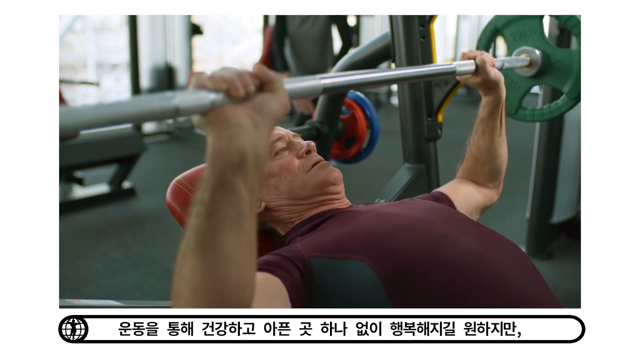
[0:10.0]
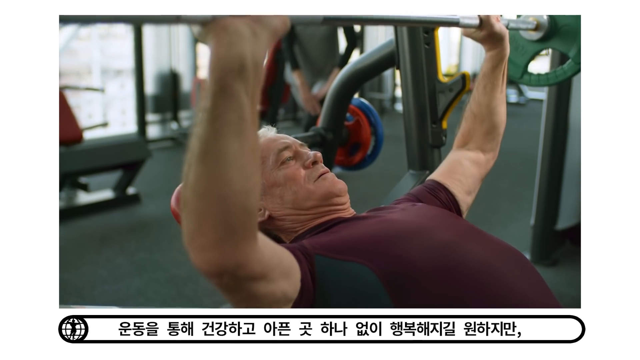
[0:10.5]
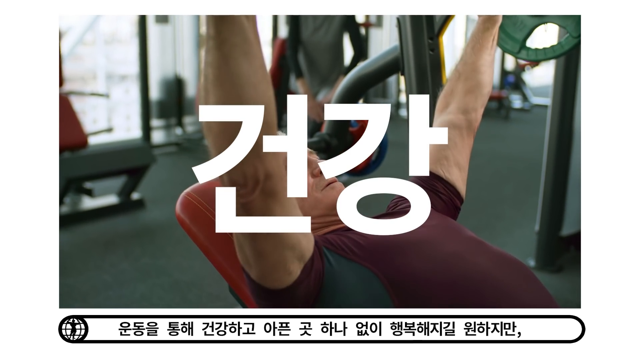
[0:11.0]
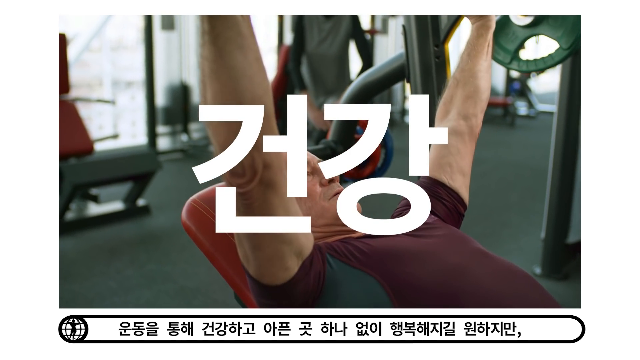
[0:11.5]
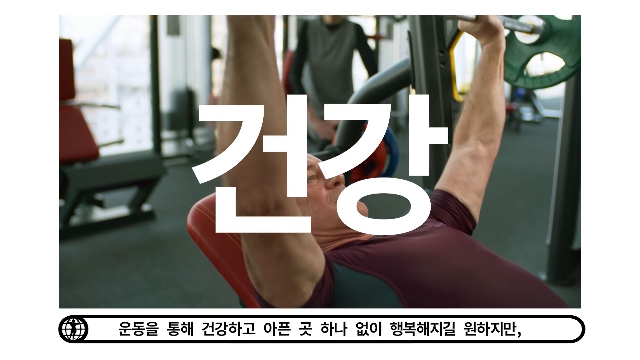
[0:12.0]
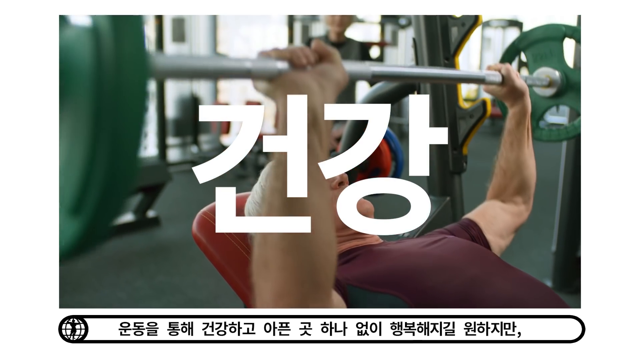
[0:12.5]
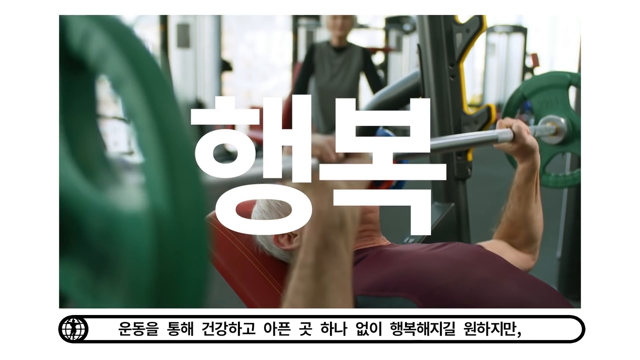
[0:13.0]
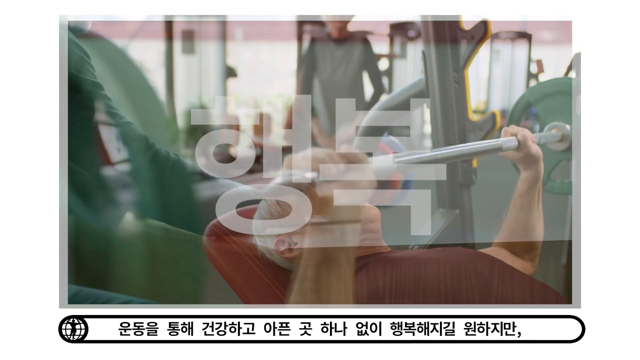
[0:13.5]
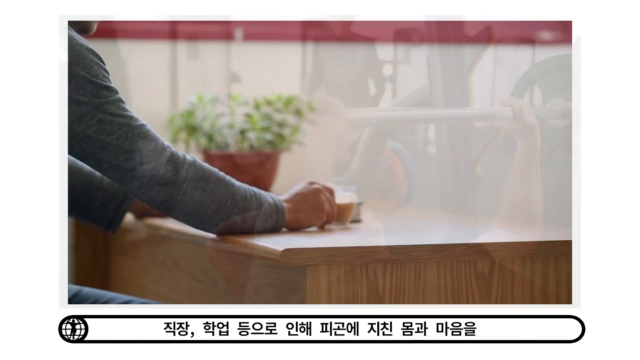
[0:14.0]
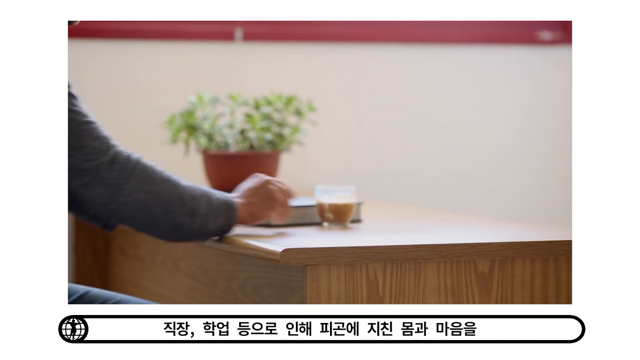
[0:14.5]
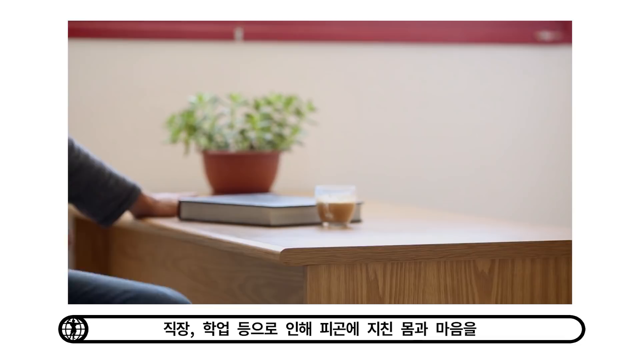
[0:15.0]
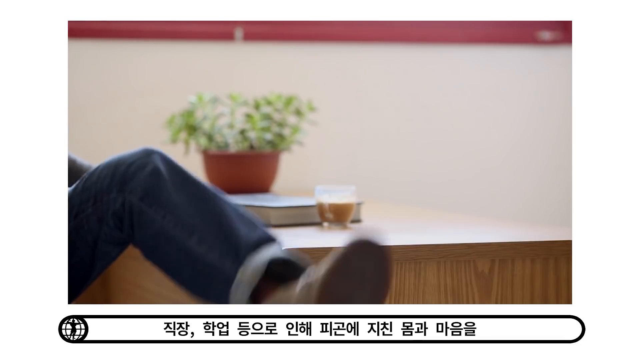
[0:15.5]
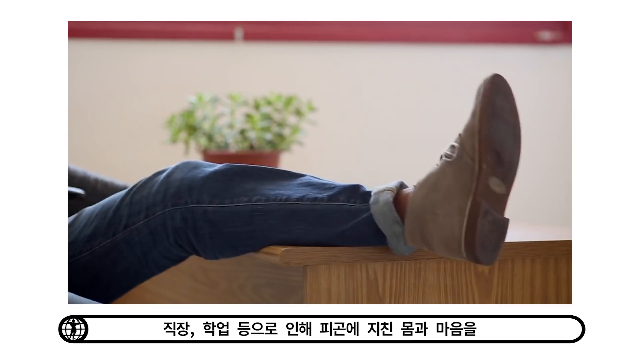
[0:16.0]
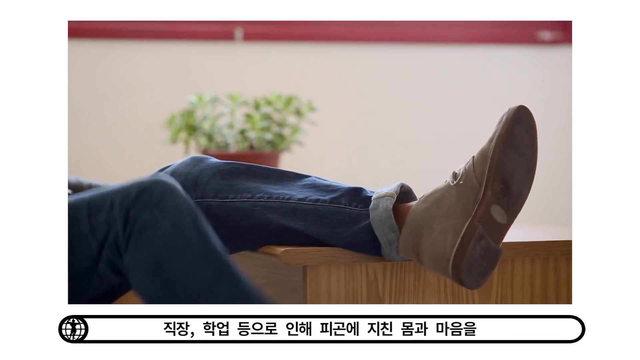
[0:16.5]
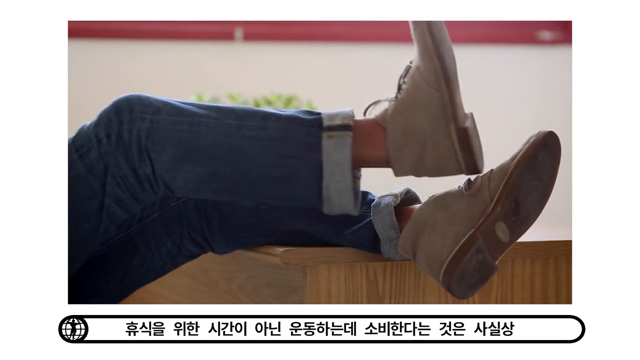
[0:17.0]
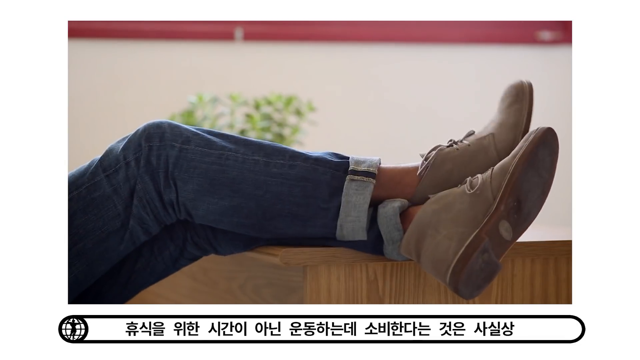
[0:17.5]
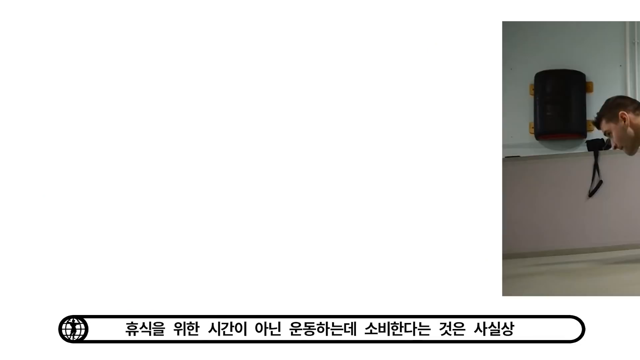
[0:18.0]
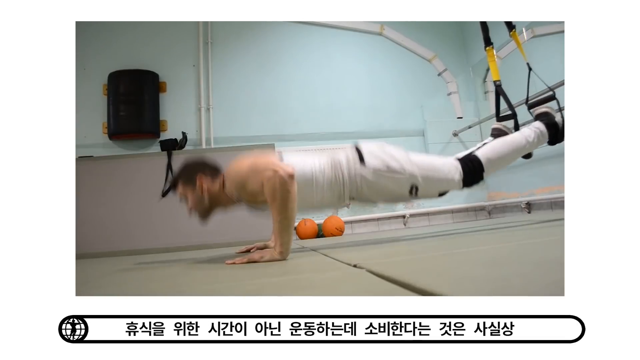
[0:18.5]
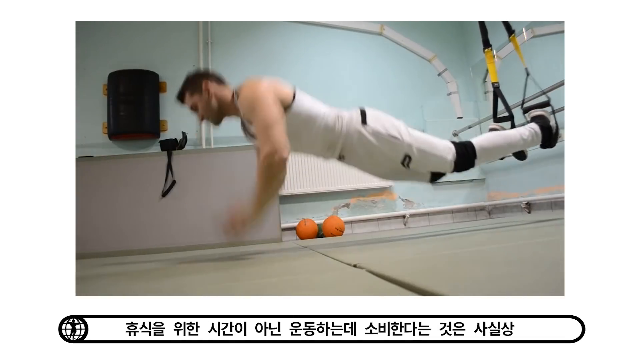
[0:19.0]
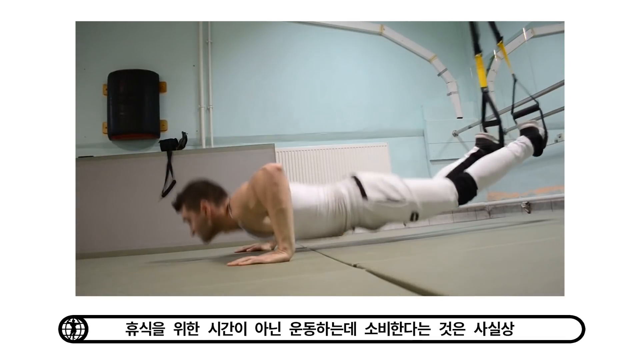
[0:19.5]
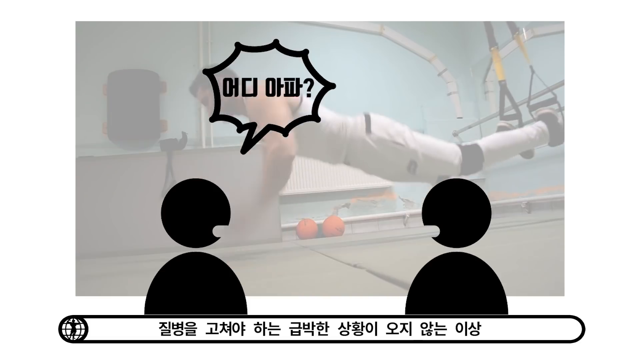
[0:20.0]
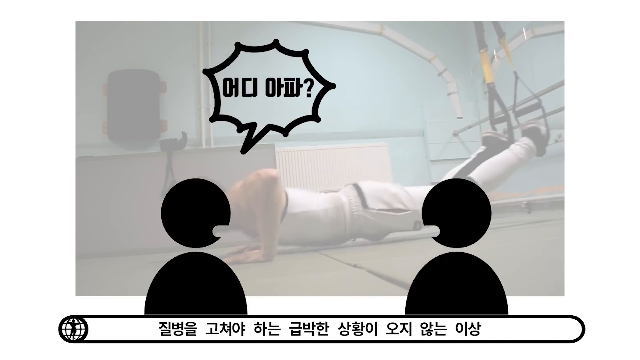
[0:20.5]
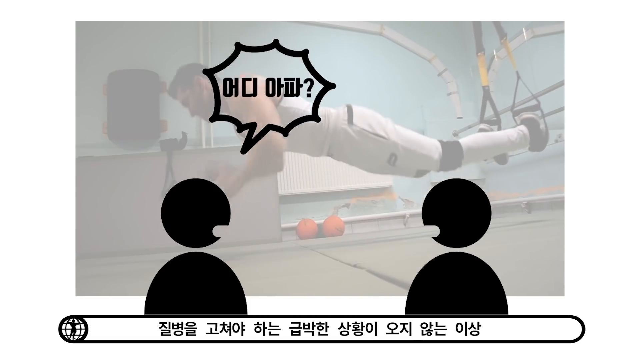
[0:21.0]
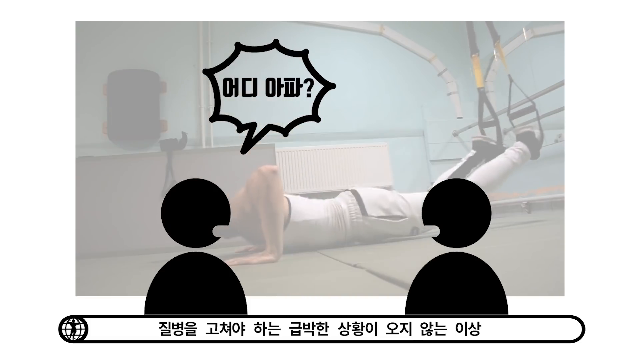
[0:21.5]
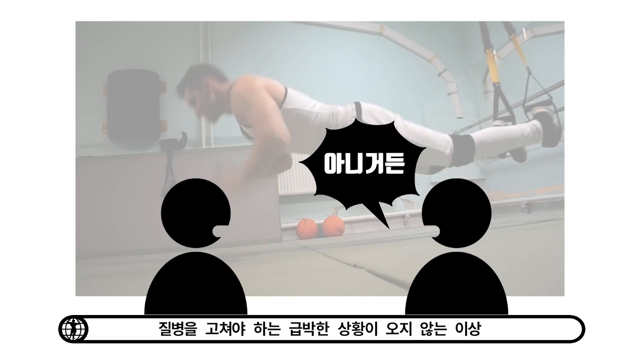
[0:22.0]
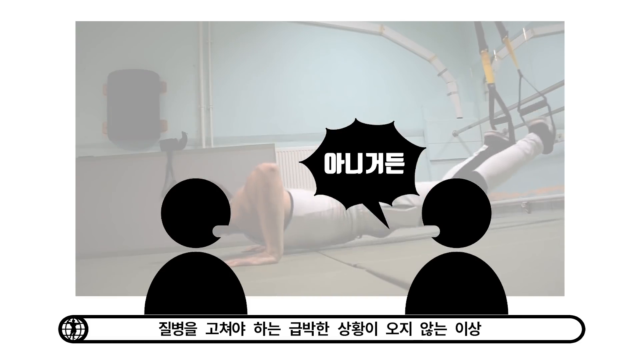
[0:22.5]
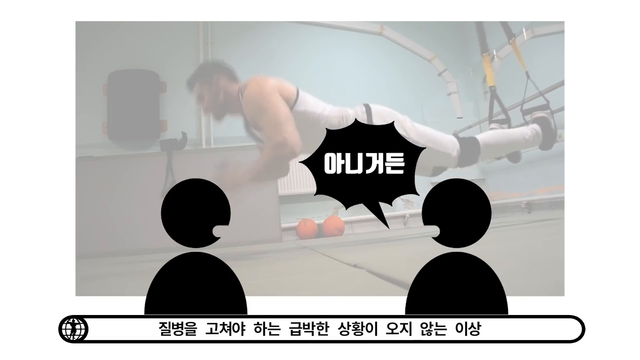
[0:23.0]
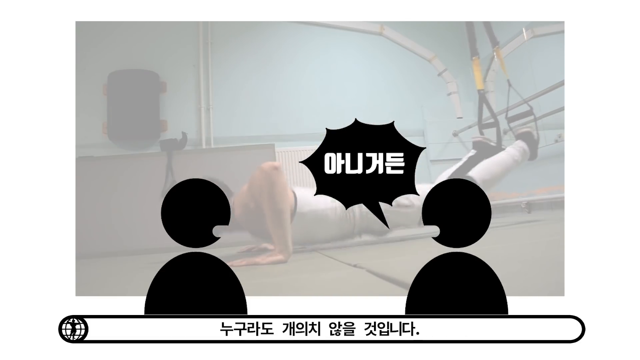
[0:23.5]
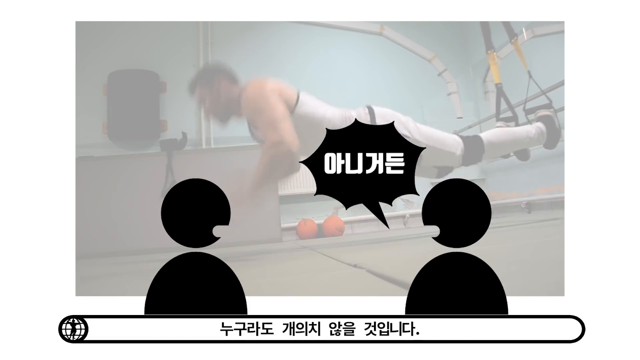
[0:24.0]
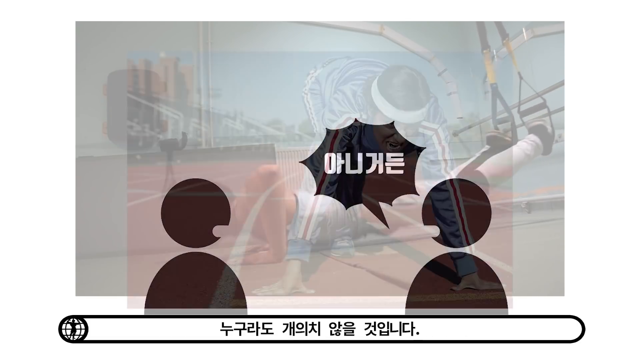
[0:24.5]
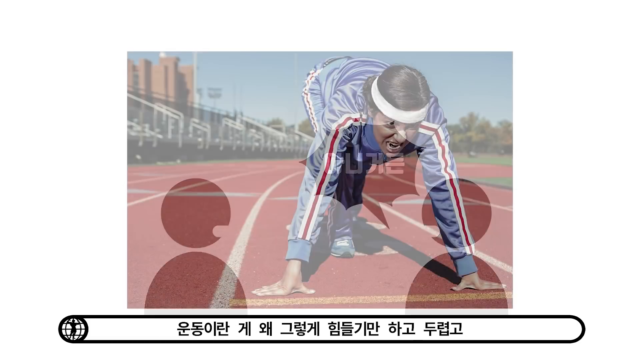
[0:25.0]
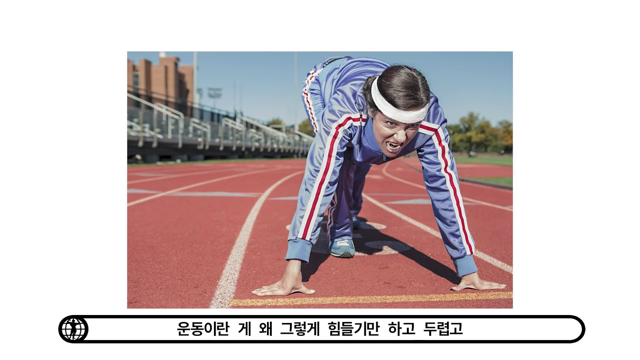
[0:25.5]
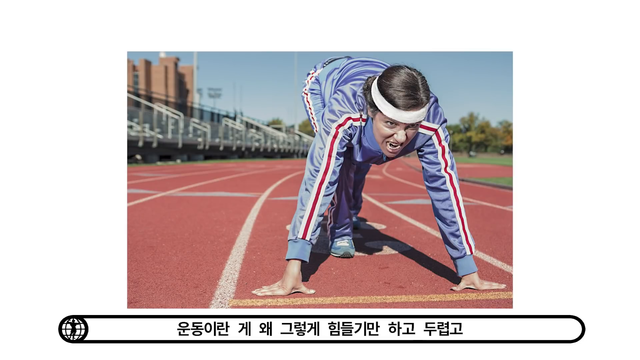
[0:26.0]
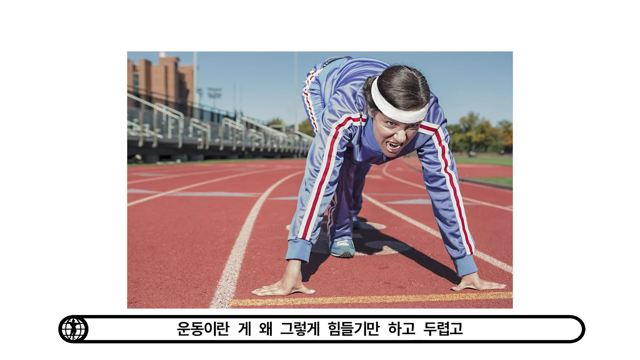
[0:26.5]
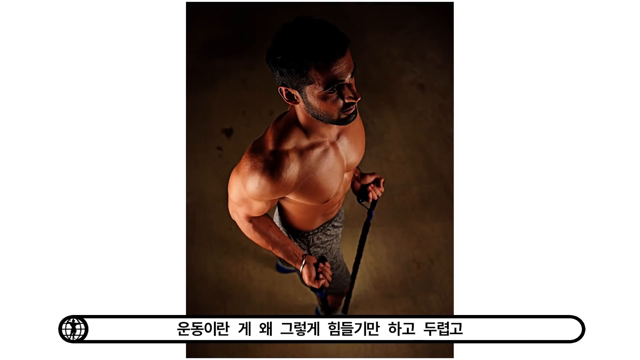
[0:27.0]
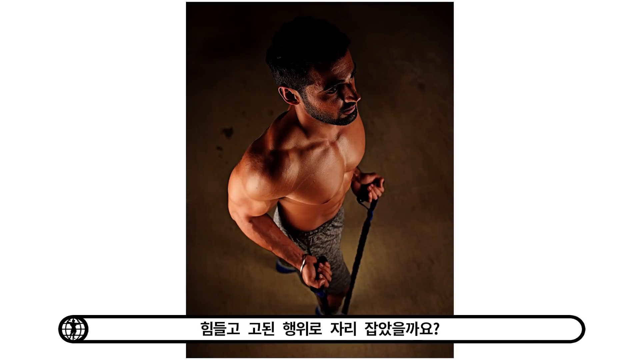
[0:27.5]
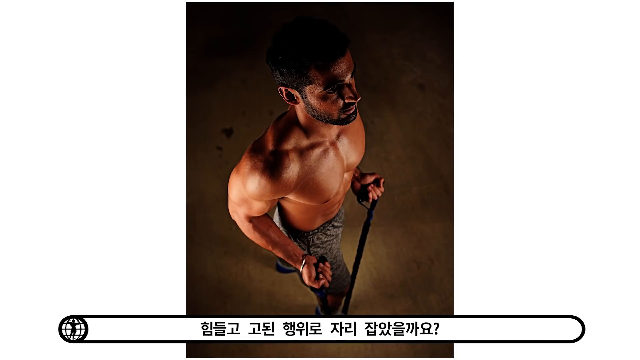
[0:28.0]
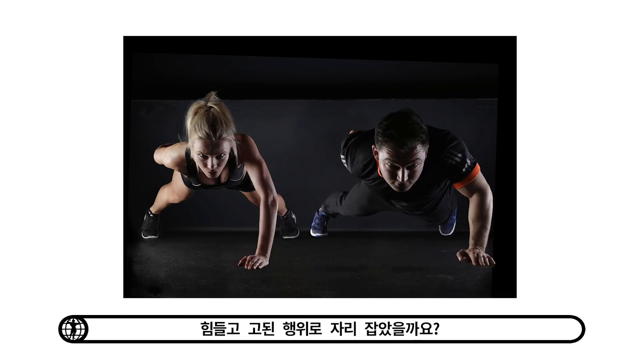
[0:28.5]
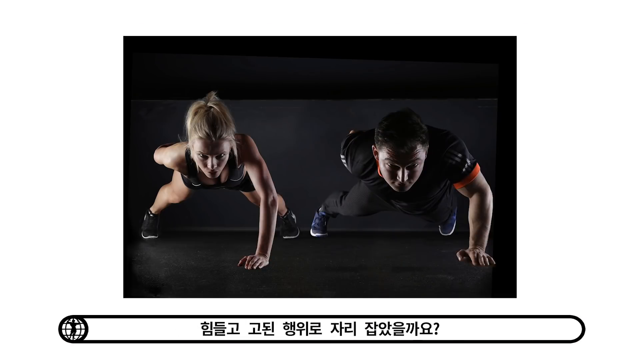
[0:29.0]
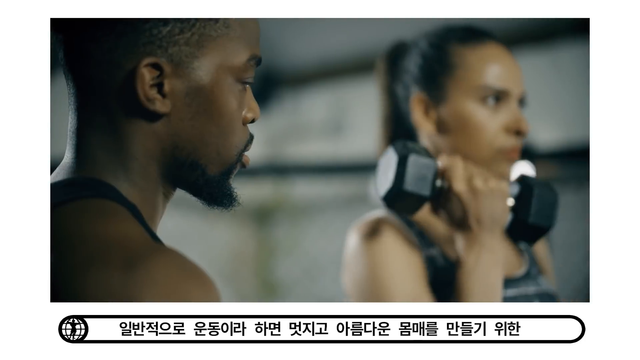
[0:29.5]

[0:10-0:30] An older gentleman lifts weights in the gym. The video appears not to be in English: there are ideograms in black font in a white banner at the bottom of the frame, and a white bar outline goes around the picture. After the gym, the video shows people working out and doing high-endurance sports. A man has his feet in stirrups and does push-ups with his upper body, clapping each time he pushes up before going back down to the floor. A picture shows a woman about to start a track meet. A man works out with bands, seen from an aerial view; the picture is sort of dark. Two women then do push-ups on the ground in the dark. Finally, a man and a woman do push-ups side by side with one hand on the ground.